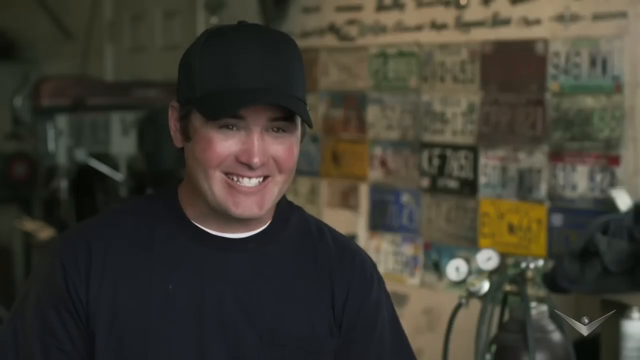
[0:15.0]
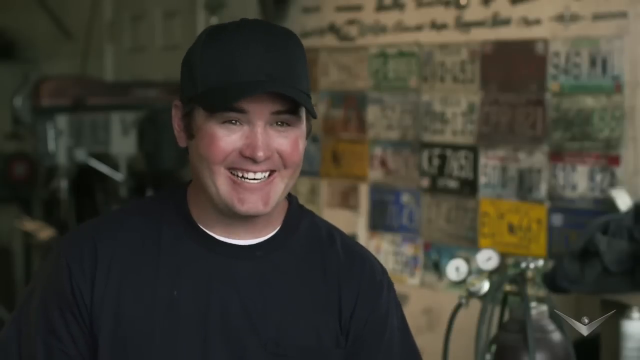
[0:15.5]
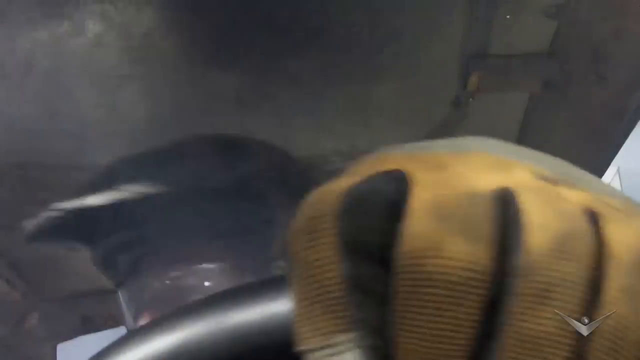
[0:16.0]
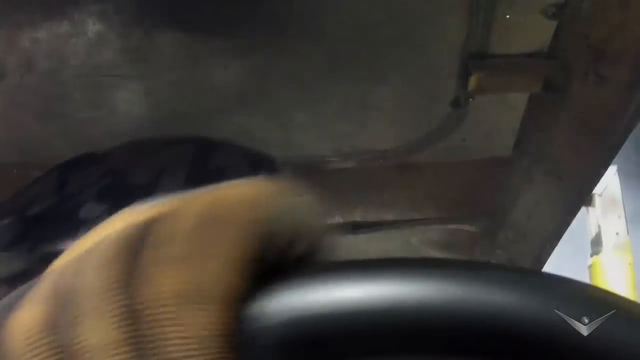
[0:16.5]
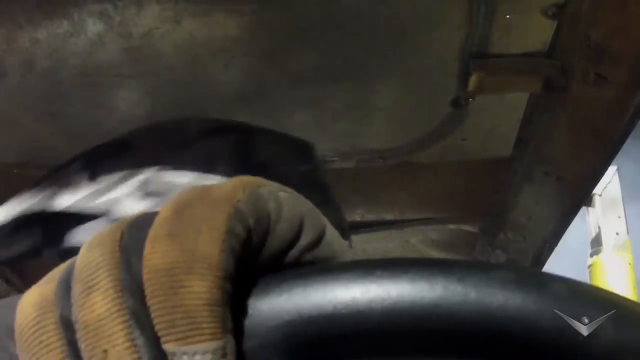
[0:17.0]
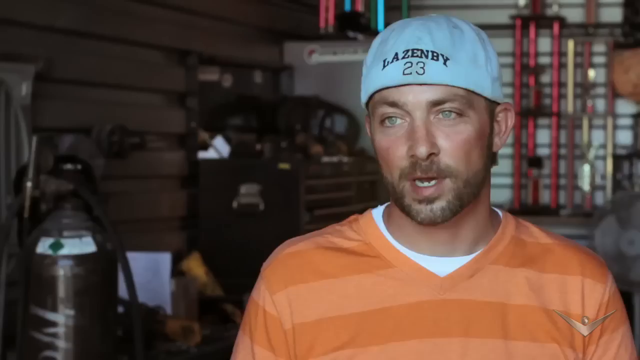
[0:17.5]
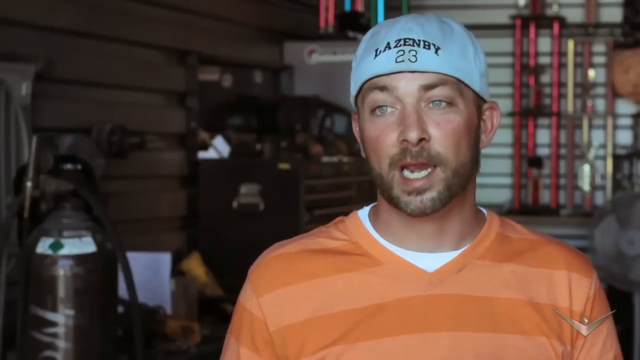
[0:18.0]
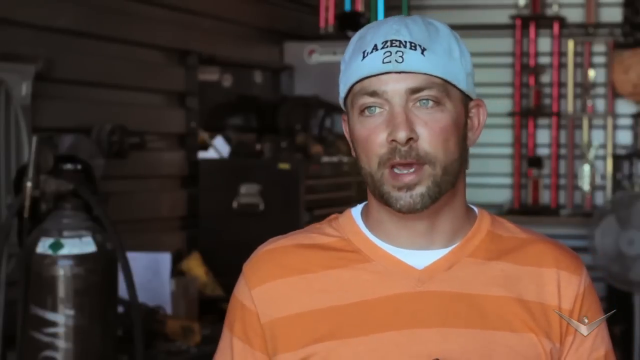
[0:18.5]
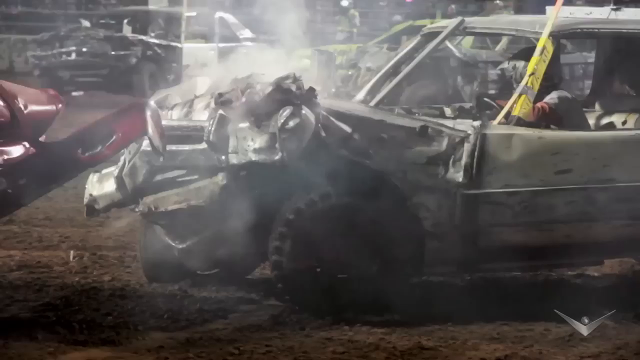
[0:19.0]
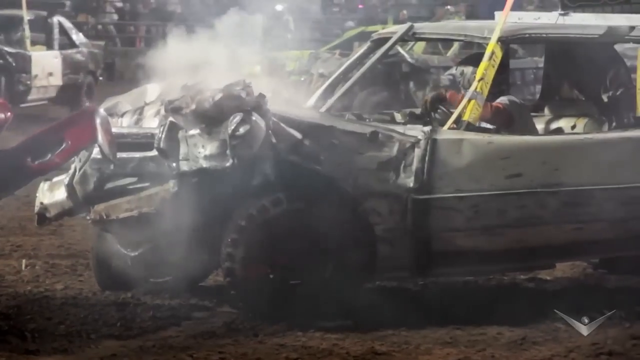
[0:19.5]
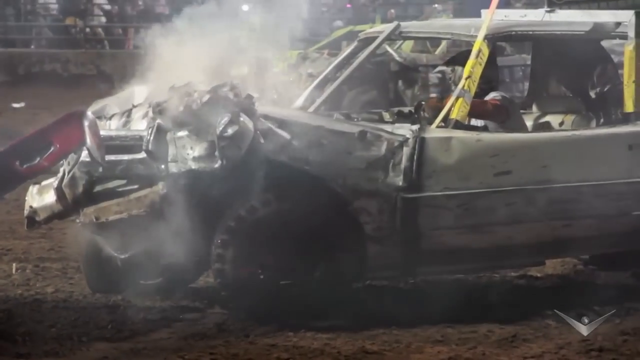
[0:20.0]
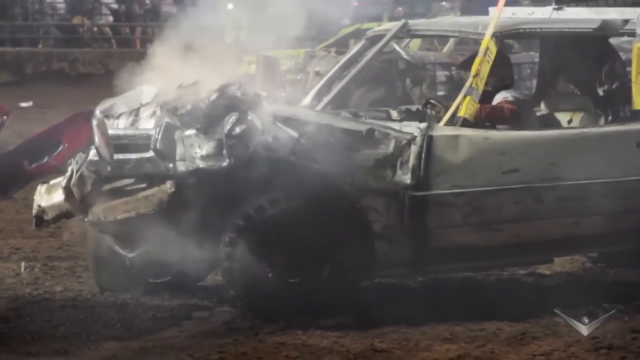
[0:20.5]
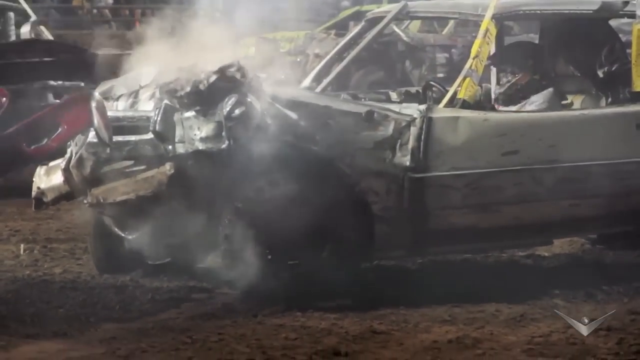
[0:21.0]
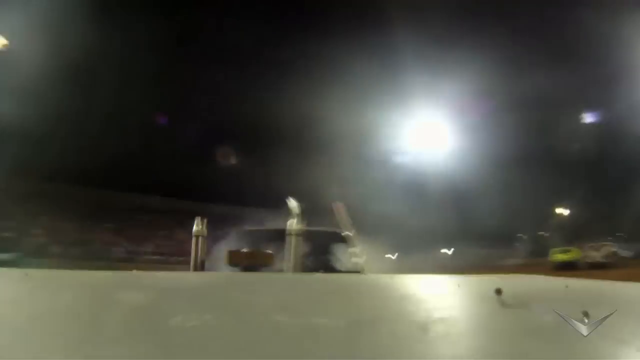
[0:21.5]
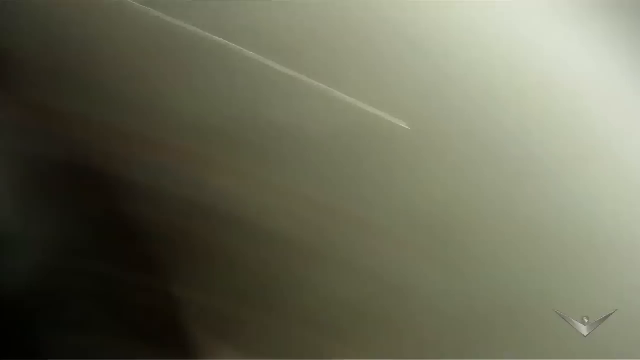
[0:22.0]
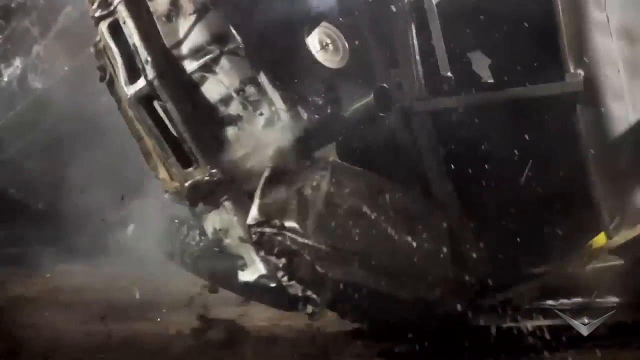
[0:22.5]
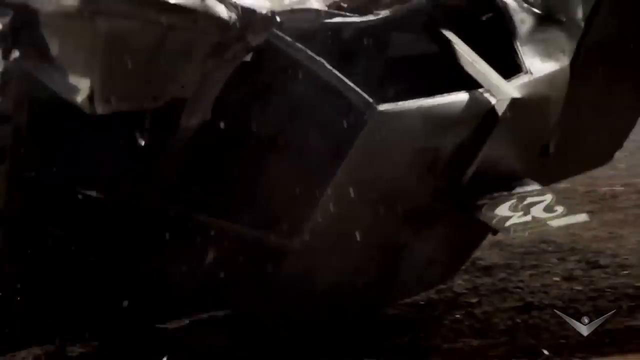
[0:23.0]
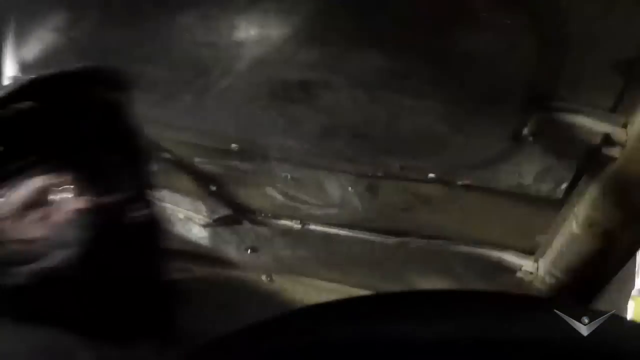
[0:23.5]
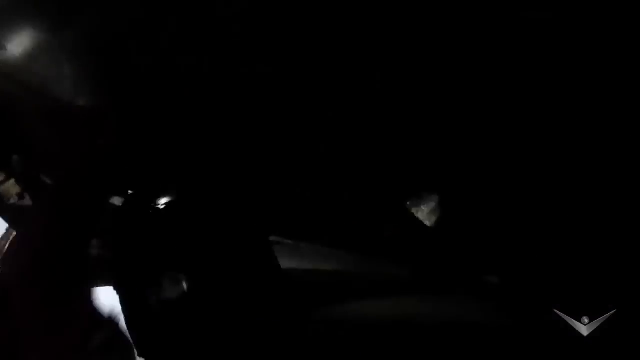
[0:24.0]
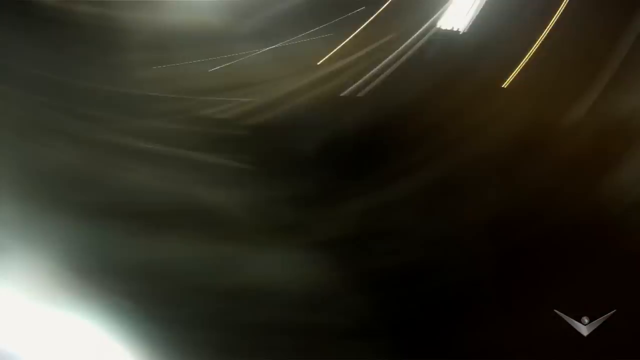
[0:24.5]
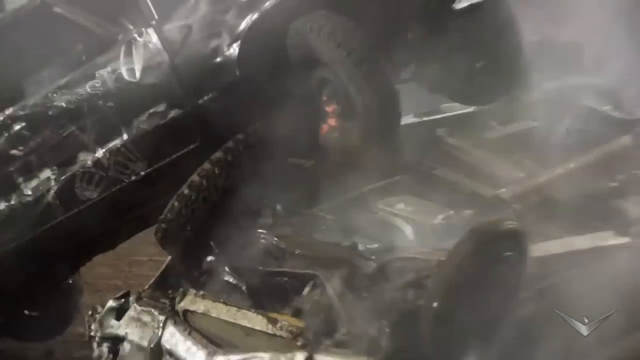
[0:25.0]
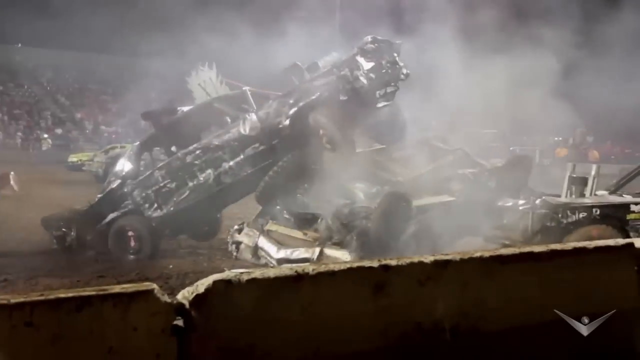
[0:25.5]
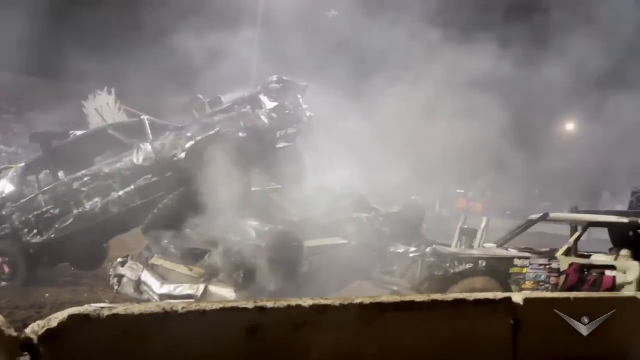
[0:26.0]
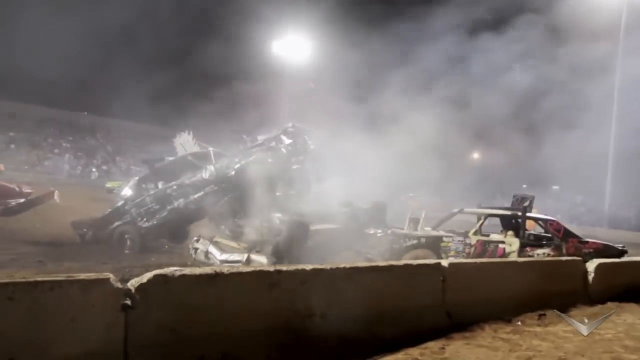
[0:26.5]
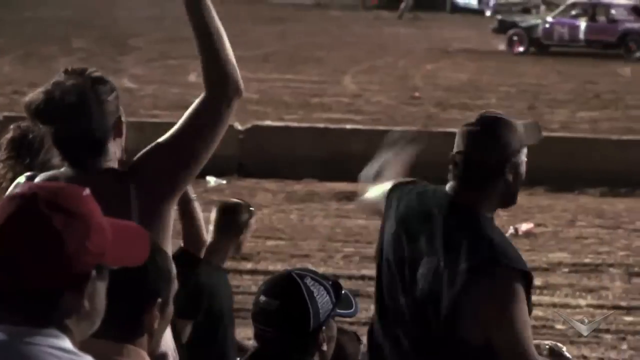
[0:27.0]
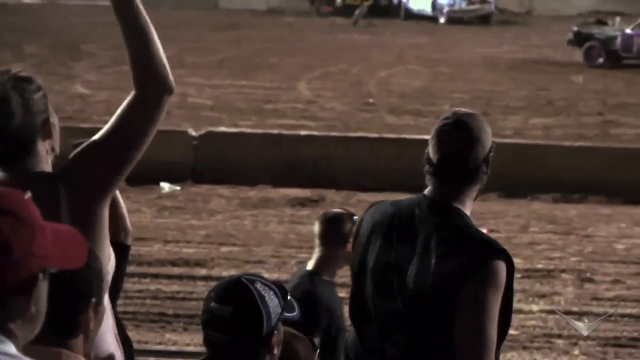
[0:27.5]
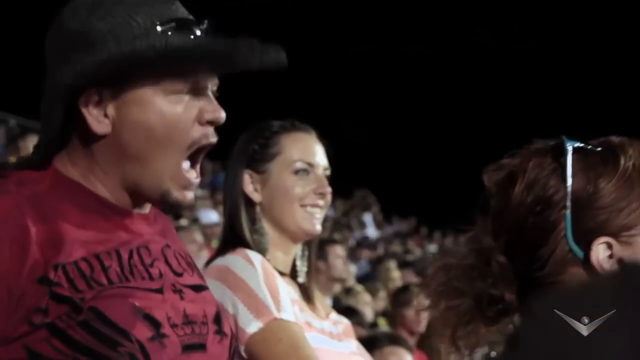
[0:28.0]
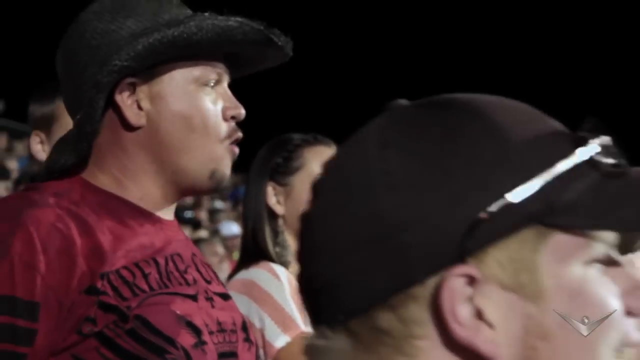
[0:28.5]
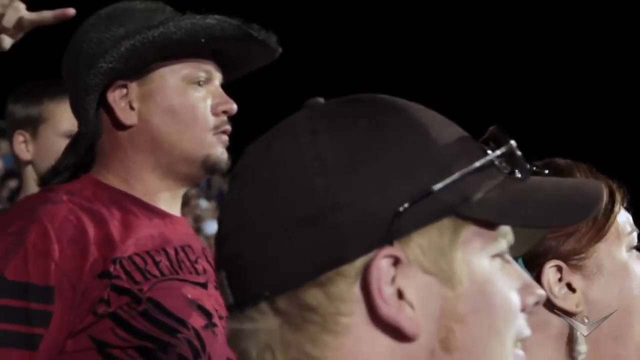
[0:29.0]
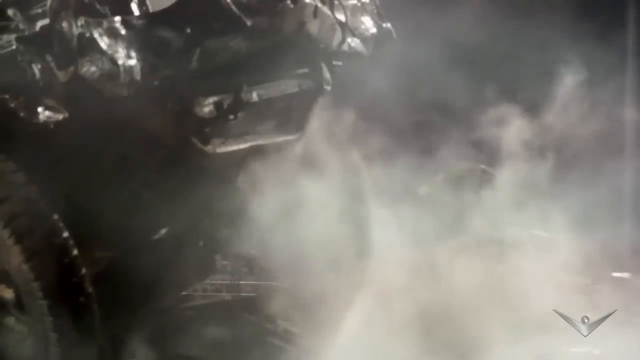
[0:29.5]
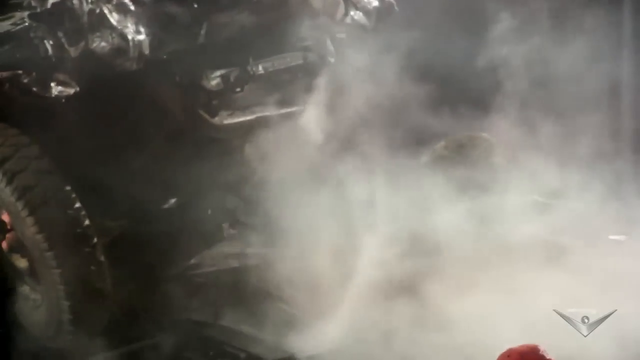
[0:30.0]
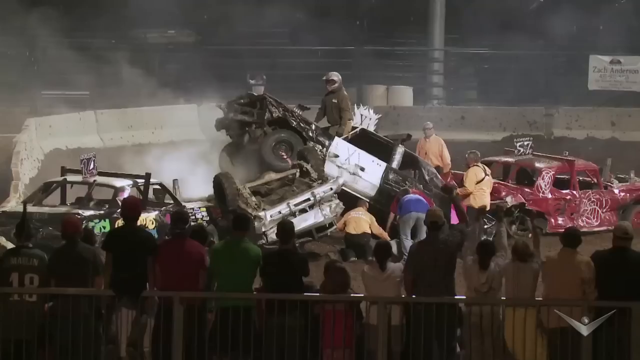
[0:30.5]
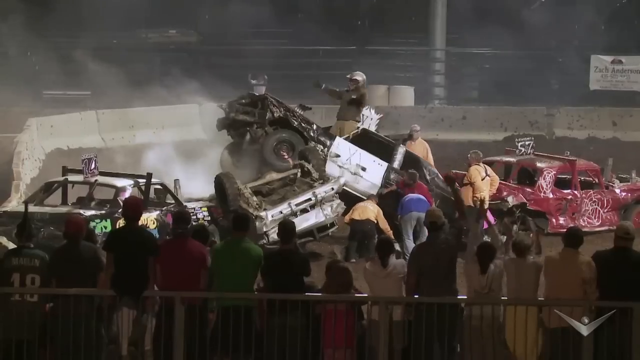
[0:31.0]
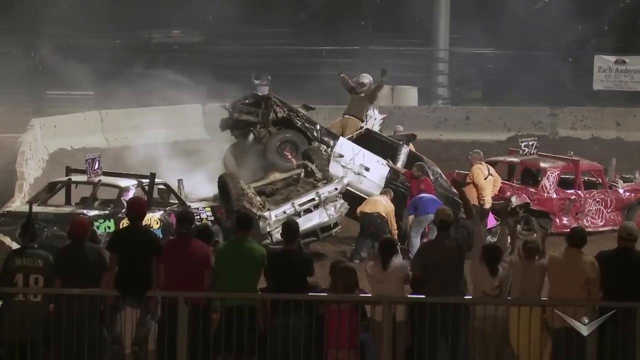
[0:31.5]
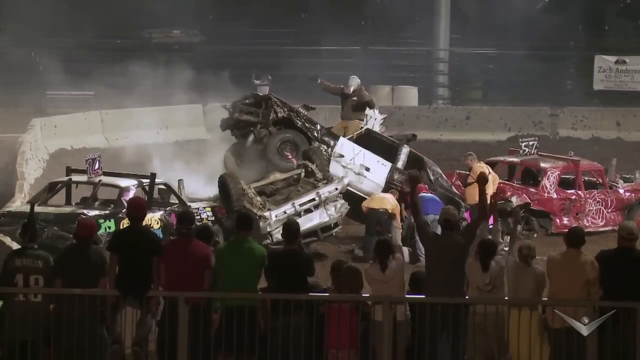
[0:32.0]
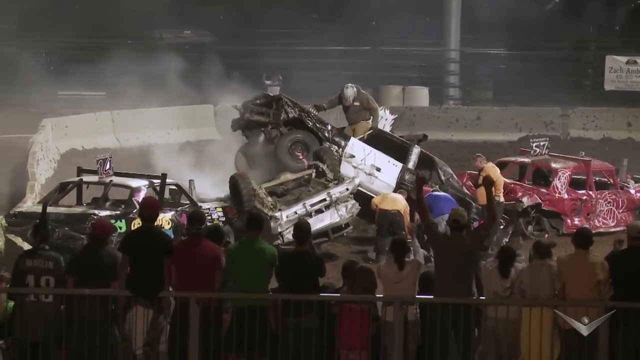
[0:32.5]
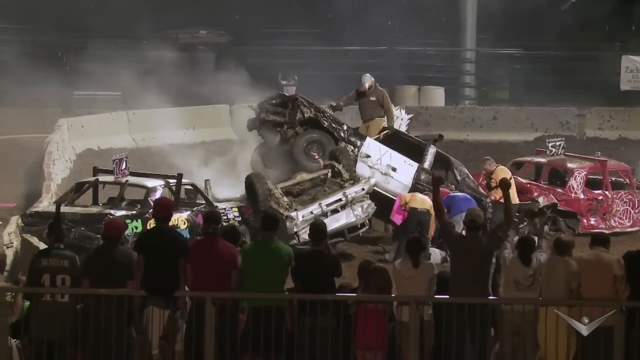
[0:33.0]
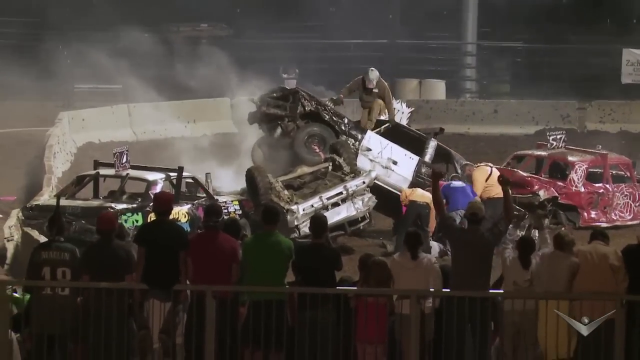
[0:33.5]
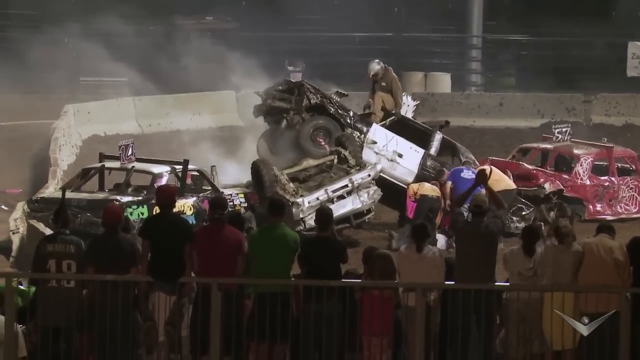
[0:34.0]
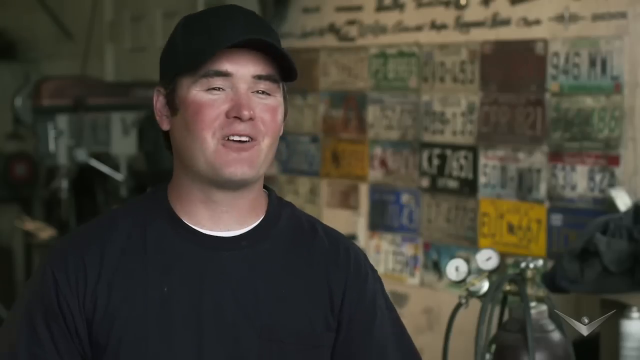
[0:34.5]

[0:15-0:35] The same white man is smiling, and then a different white man in an orange shirt and a white hat, who looks younger, maybe in his mid-twenties, is talking. In the action, a car flips over another car. The man in the black hat is seen talking and smiling, kind of like he is bragging; he looks to be in his forties. The crowd goes wild, cheering. One driver hits a car so hard that it is smoking, then comes over and hits it again; that car flips over, and the hitting driver's car ends up right on top of it. He comes out of his vehicle celebrating with his hands up, and the crowd is very pumped. The crowd looks to be maybe a couple hundred people. The man in the white hat and orange shirt is possibly the one whose car was turned over, as he does not look very happy while talking. He is a Caucasian man with blue eyes and a beard, and looks young, maybe in his late twenties or thirties.